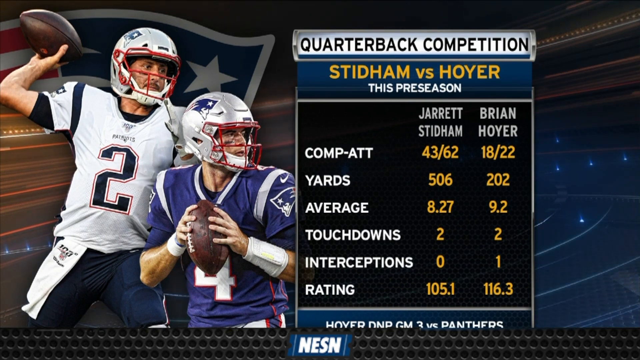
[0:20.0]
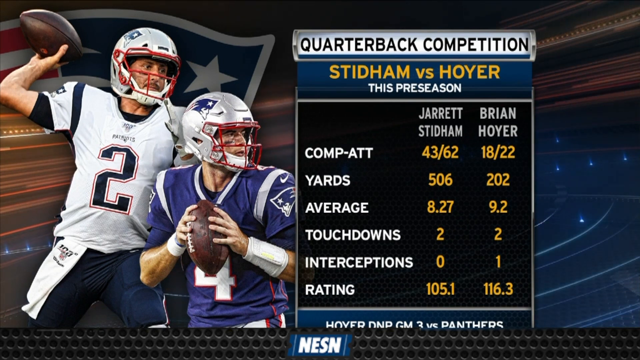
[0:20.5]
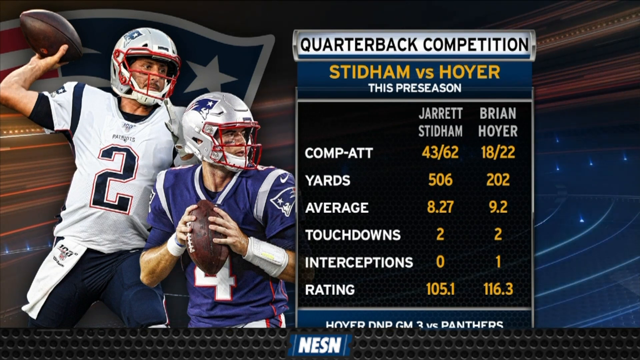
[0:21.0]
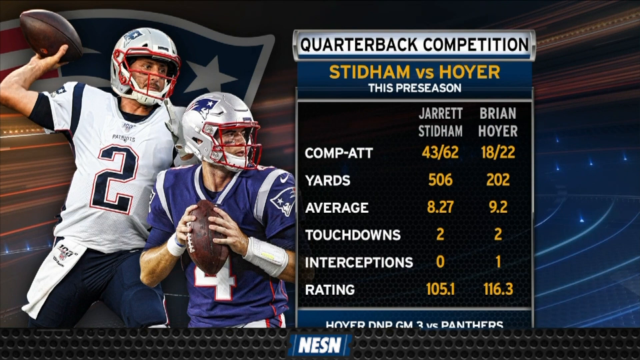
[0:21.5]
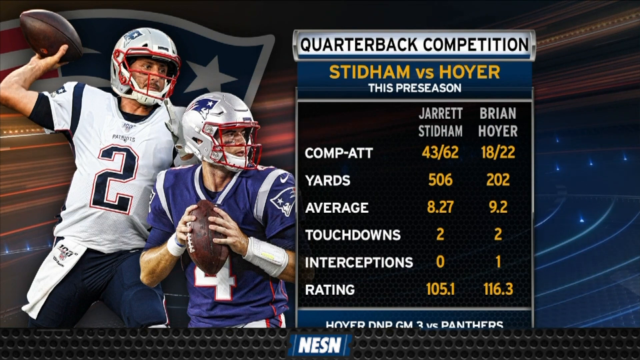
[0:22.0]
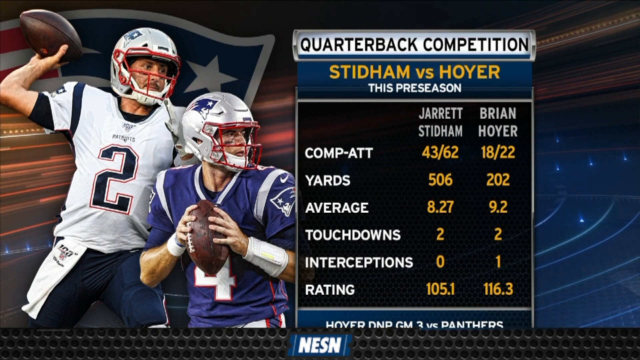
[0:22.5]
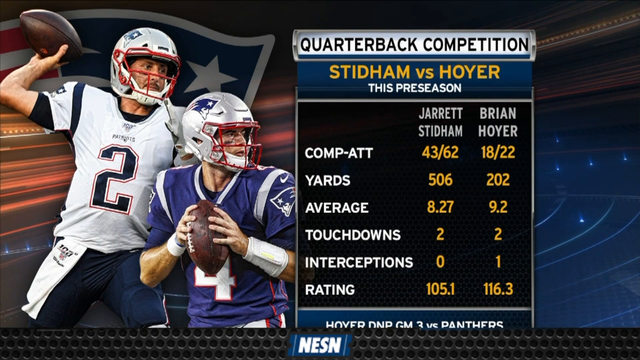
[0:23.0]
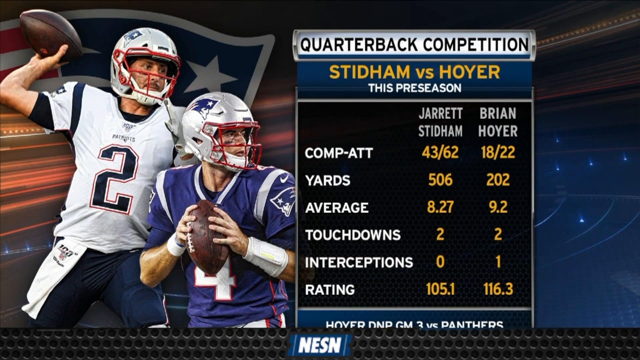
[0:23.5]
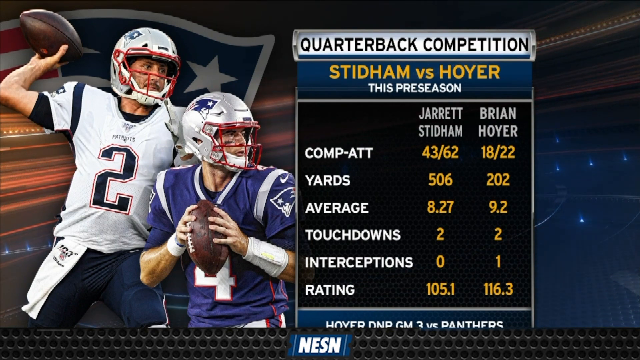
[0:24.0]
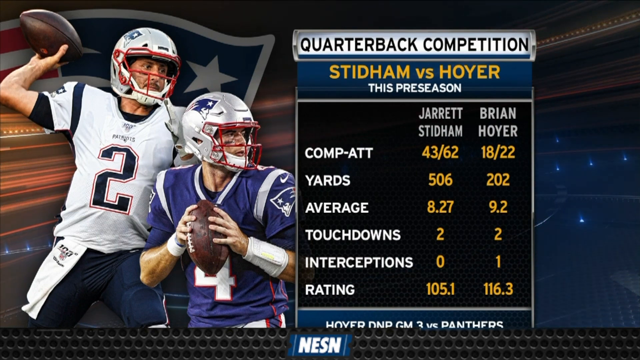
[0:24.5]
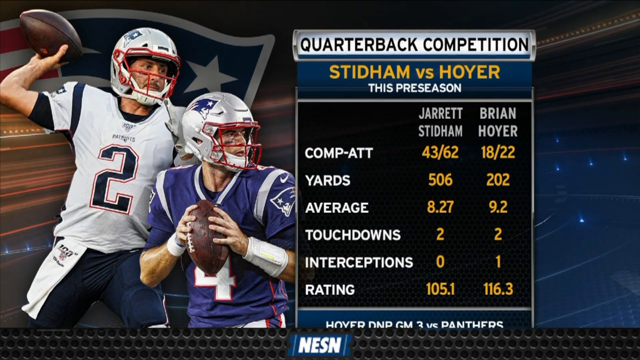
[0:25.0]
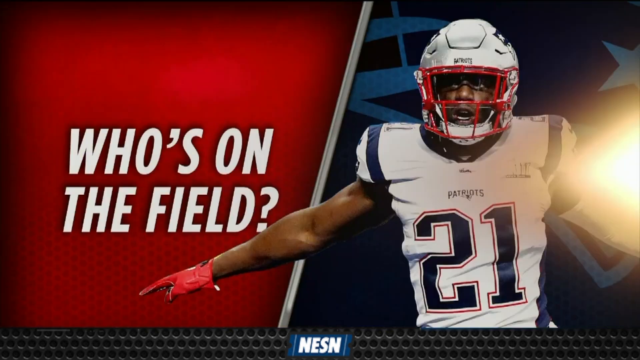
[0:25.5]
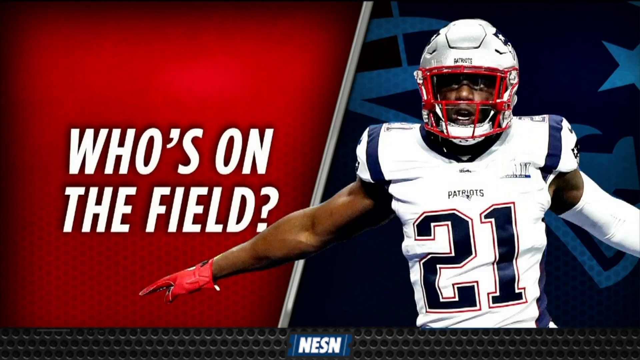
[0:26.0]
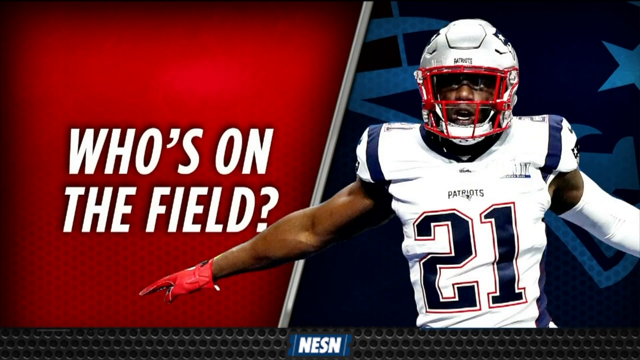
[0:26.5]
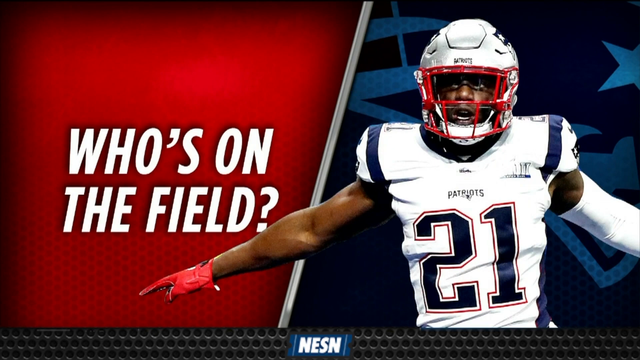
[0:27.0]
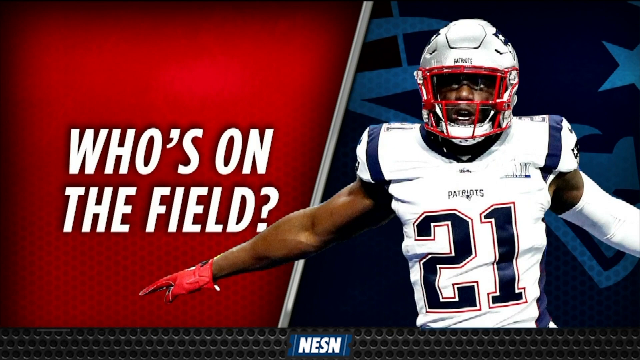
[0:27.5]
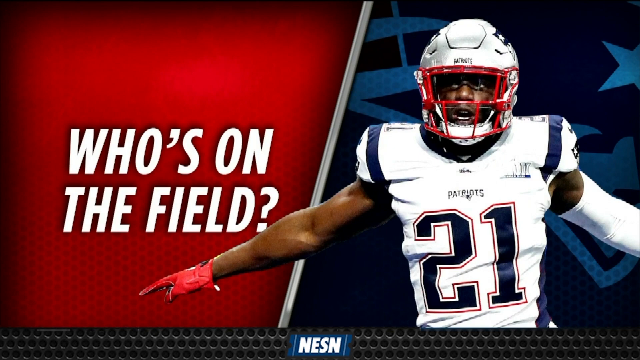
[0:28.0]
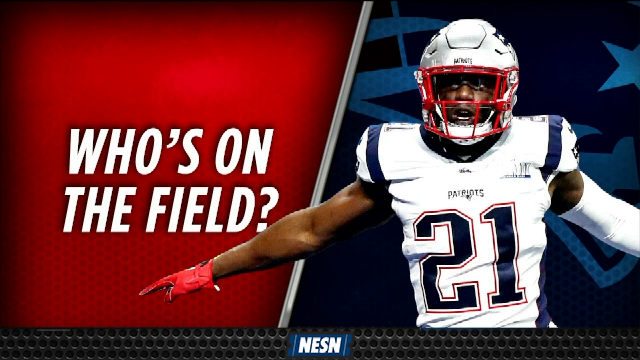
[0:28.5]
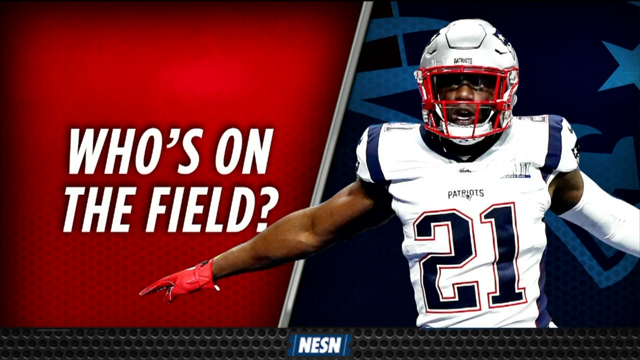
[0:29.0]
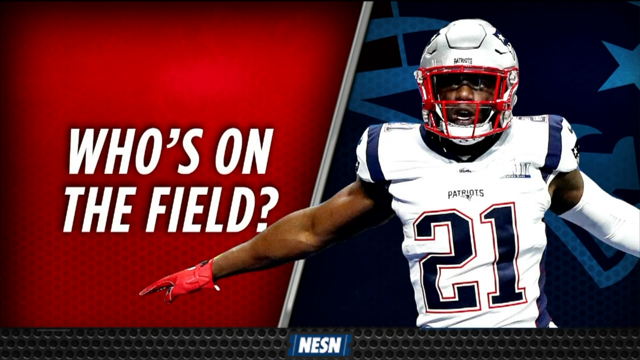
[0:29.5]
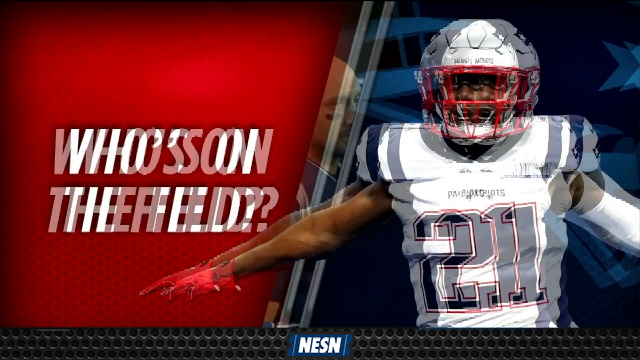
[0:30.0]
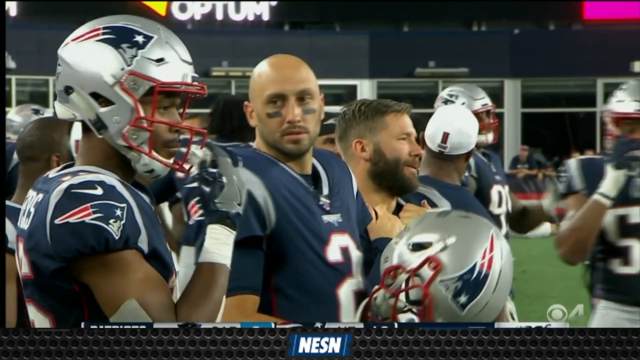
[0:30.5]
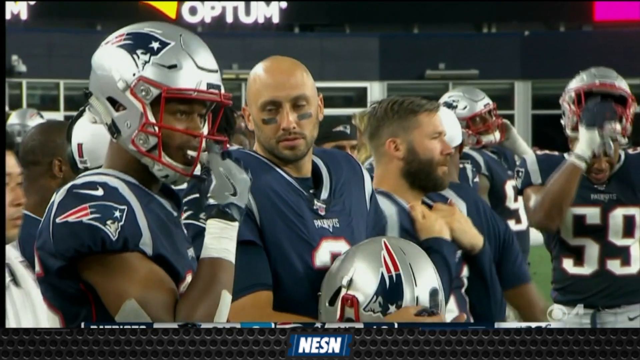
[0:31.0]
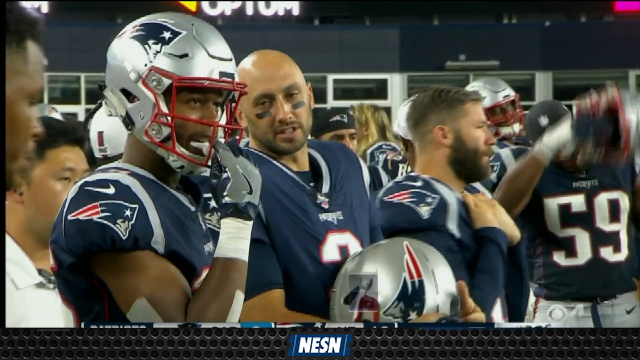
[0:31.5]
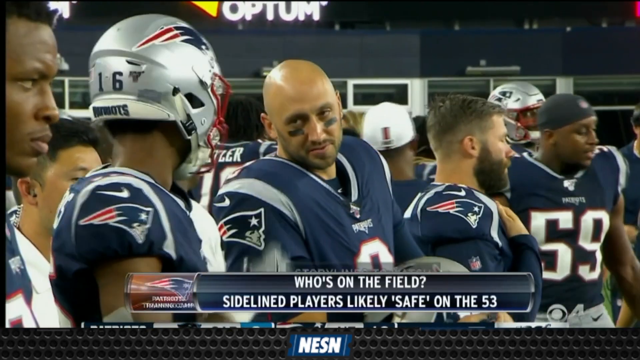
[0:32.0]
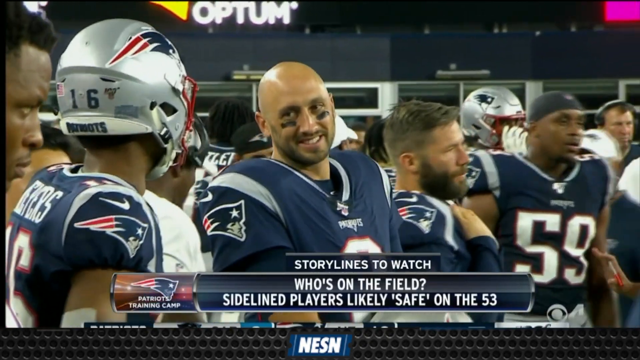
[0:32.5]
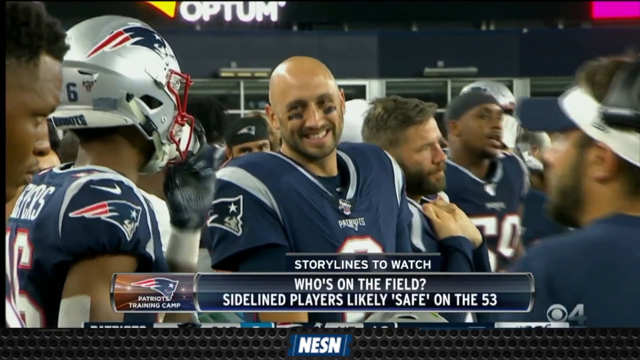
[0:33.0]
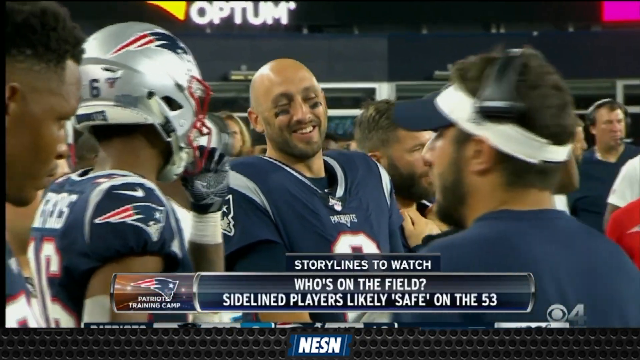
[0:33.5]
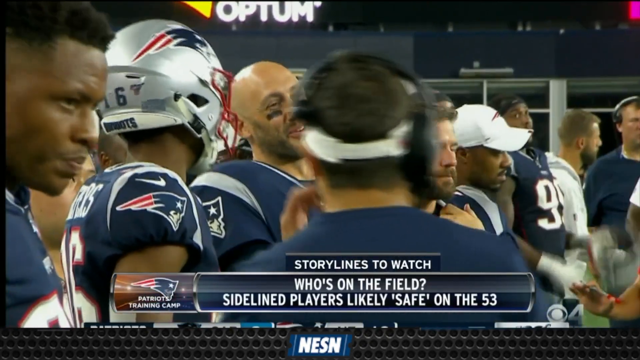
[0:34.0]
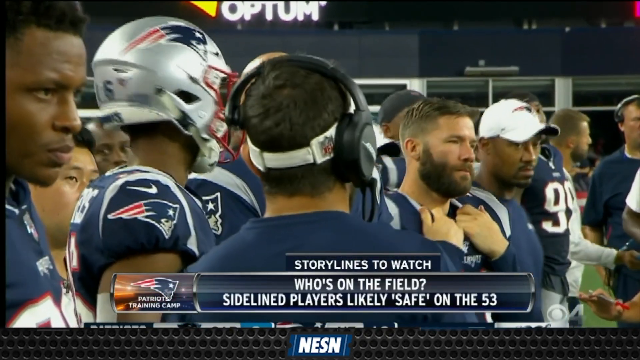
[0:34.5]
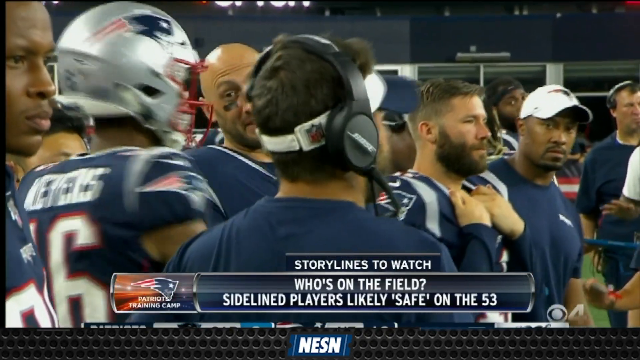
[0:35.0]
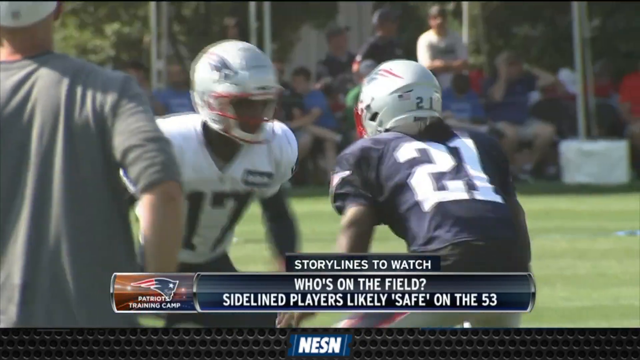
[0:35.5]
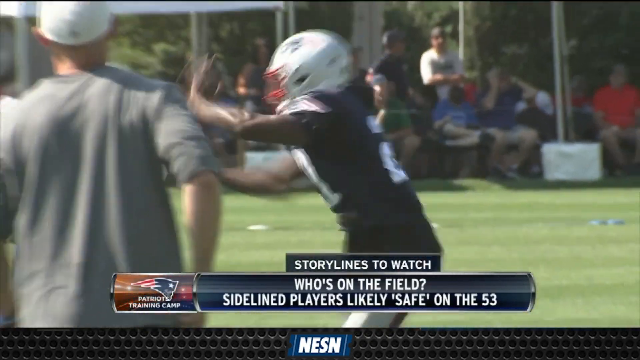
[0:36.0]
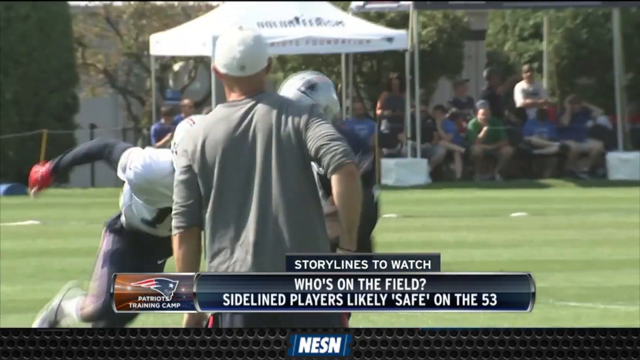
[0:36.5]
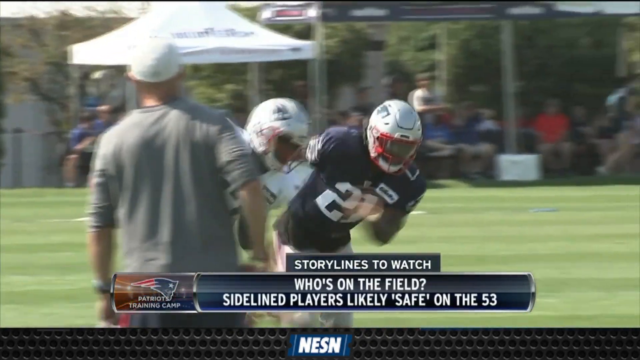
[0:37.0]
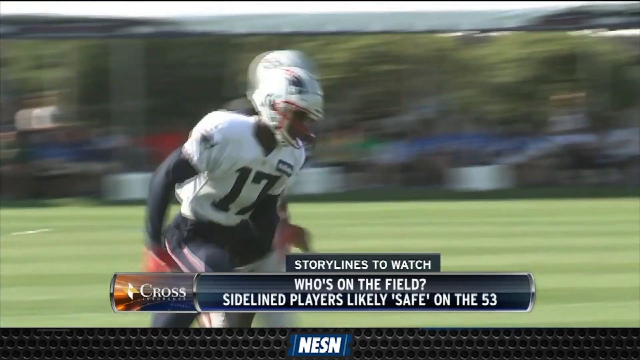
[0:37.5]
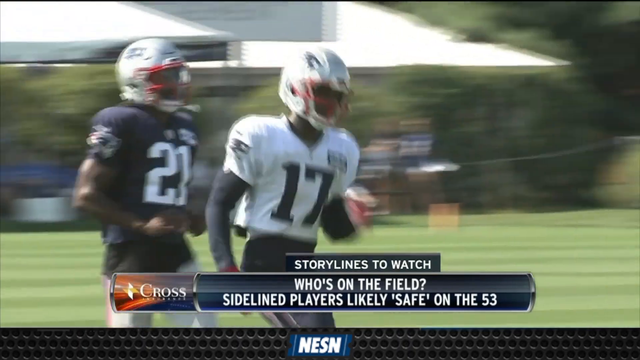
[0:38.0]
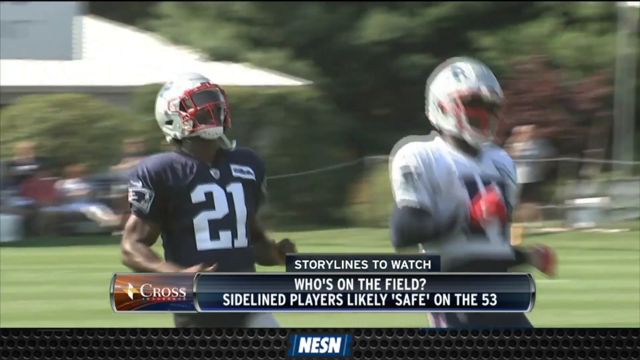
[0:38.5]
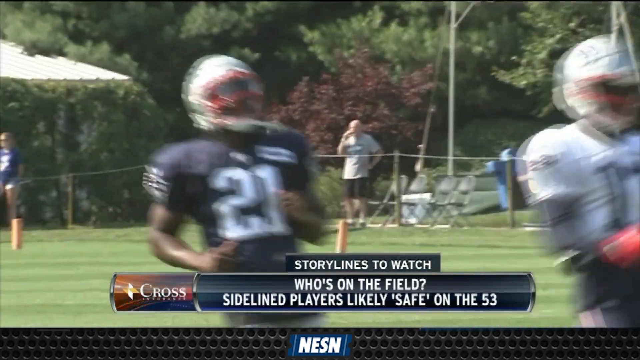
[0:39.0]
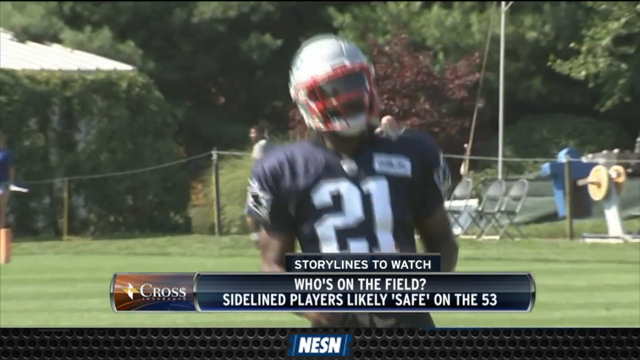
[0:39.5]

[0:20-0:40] The same two guys, rugby players who look to be about 35 to 44, appear at first. Then another single guy appears, followed by a lot of guys, too many to count. Some of them are exercising and running around, and some look like they are about to get into a game. The scene keeps moving from the two guys to the one guy and then to the bunch of guys.